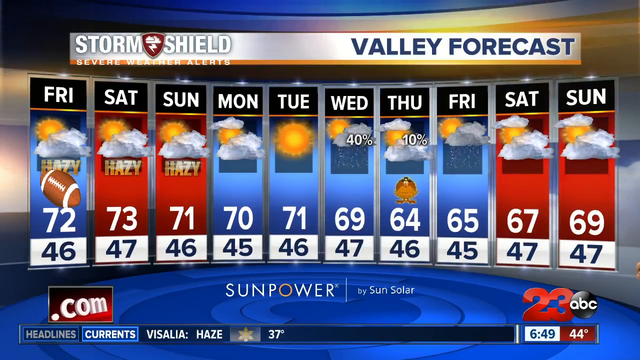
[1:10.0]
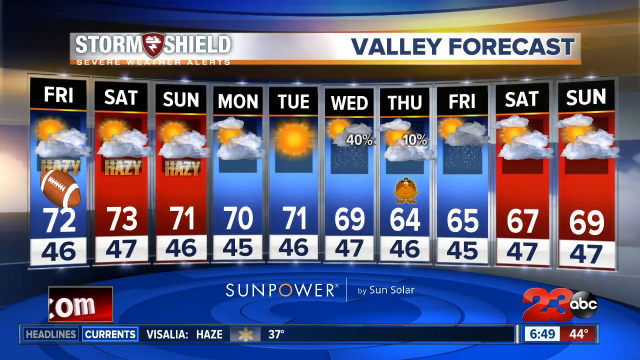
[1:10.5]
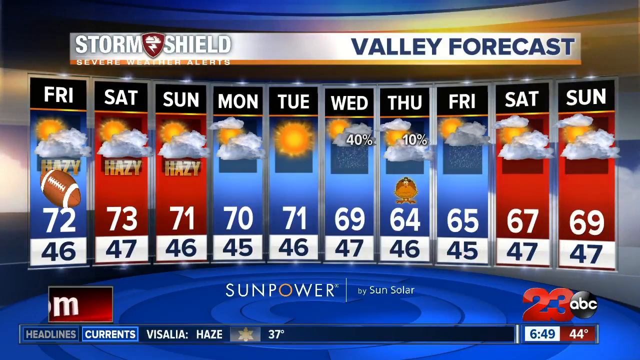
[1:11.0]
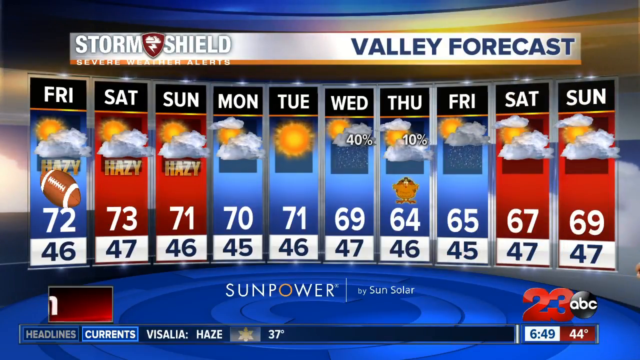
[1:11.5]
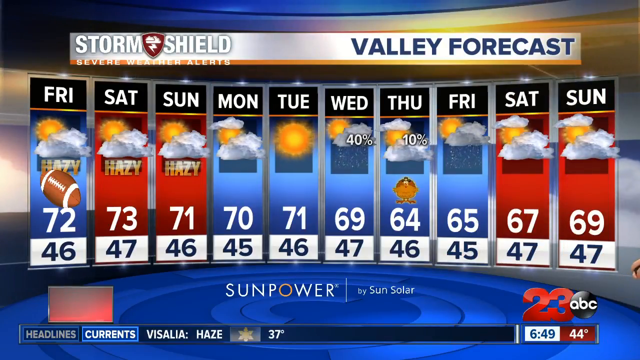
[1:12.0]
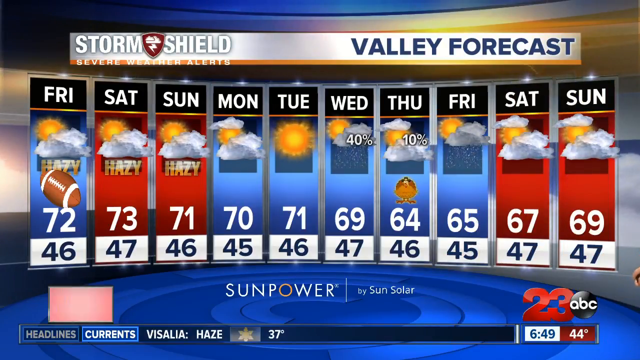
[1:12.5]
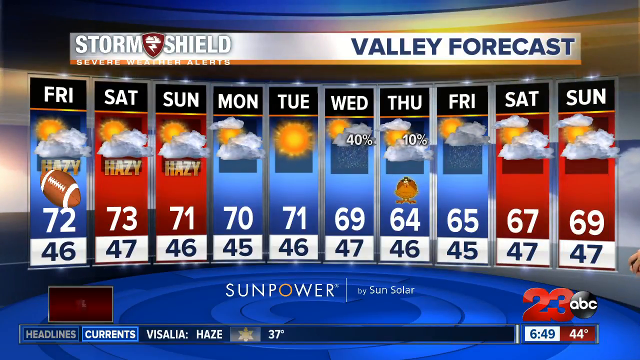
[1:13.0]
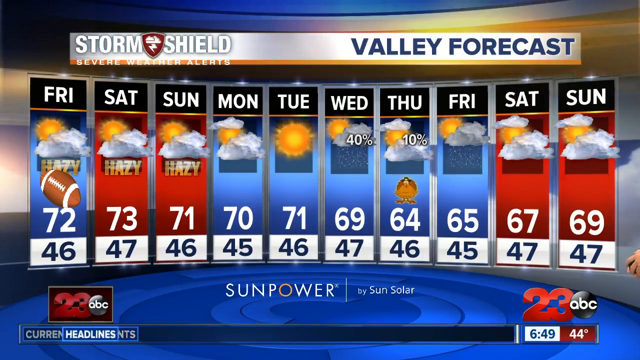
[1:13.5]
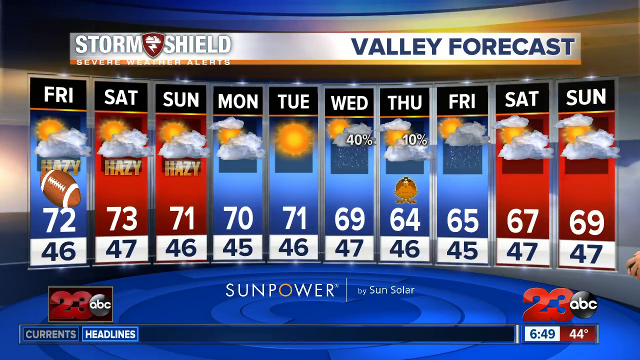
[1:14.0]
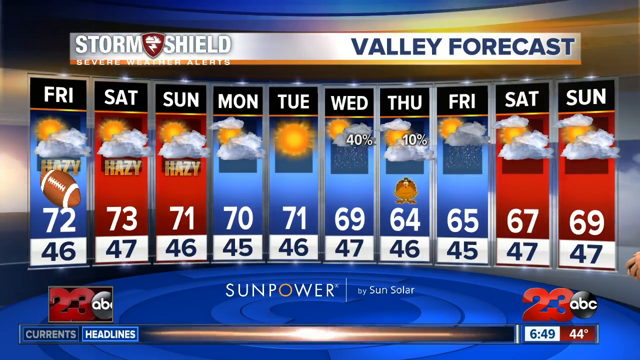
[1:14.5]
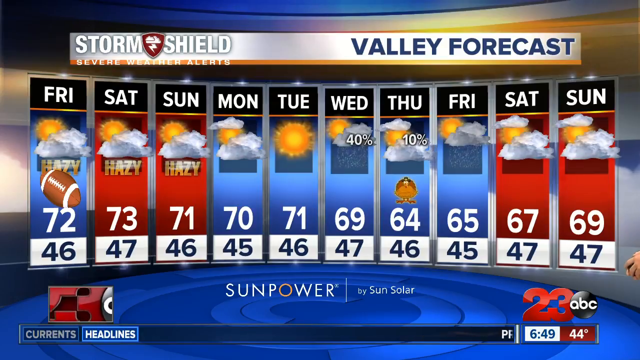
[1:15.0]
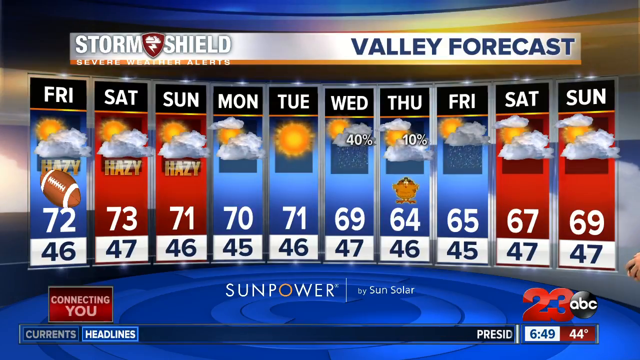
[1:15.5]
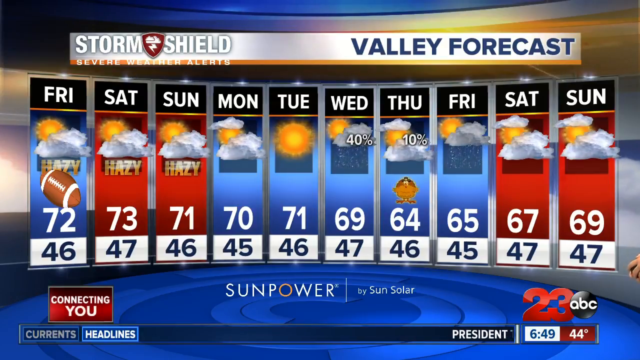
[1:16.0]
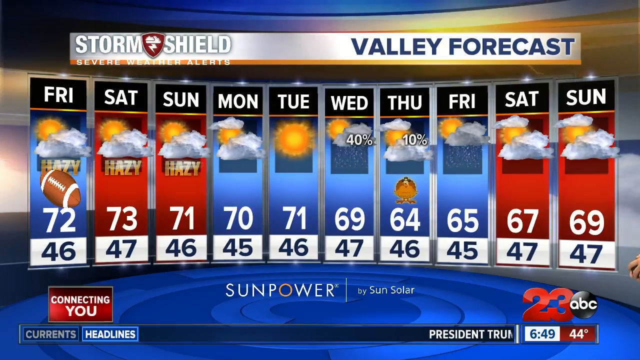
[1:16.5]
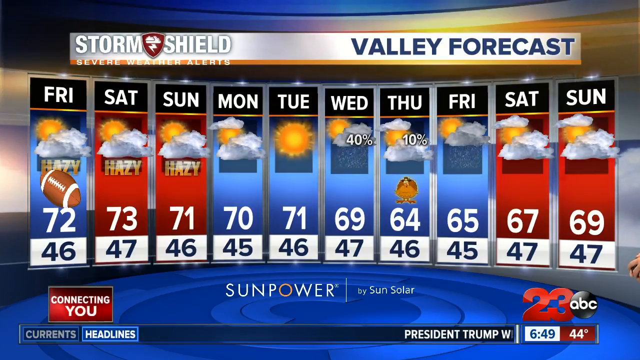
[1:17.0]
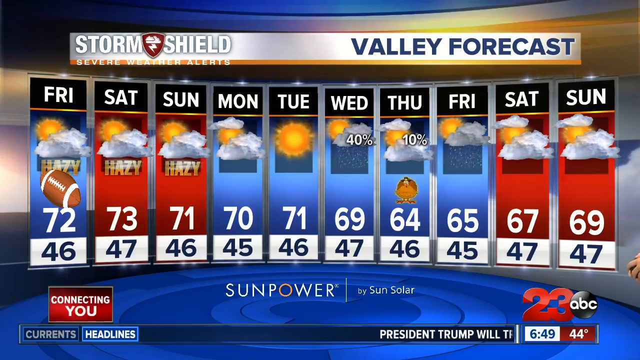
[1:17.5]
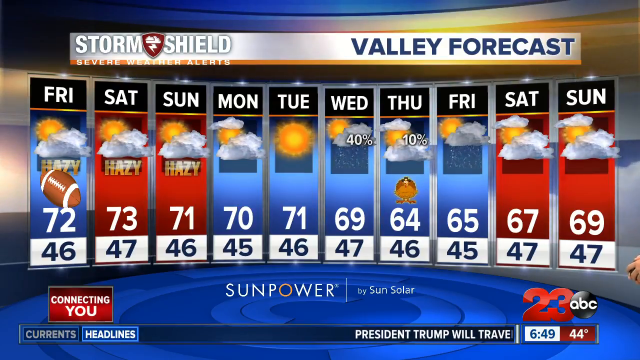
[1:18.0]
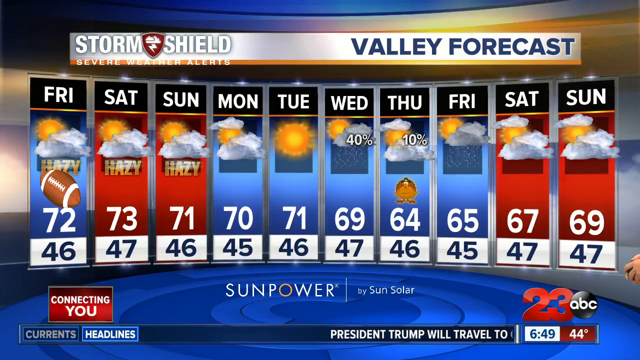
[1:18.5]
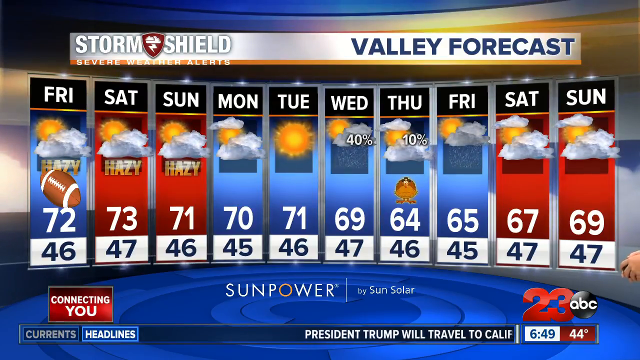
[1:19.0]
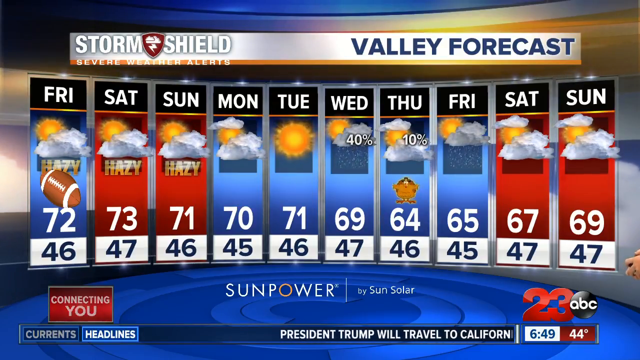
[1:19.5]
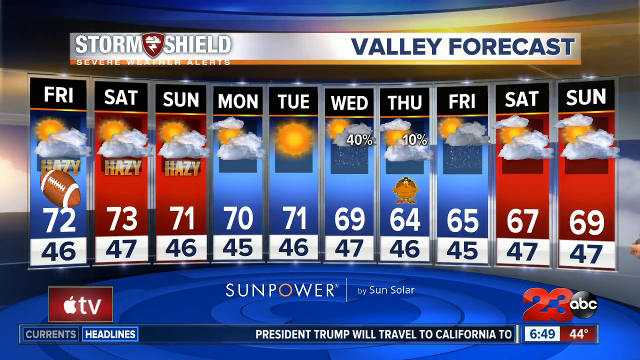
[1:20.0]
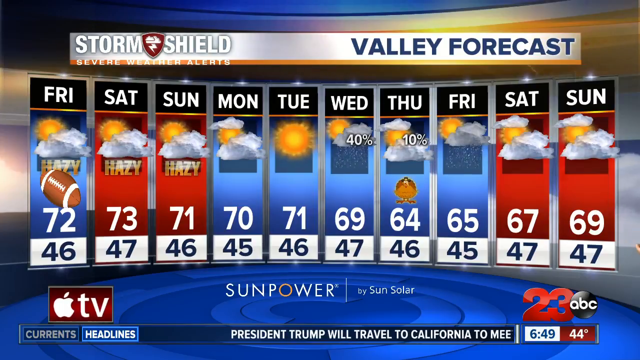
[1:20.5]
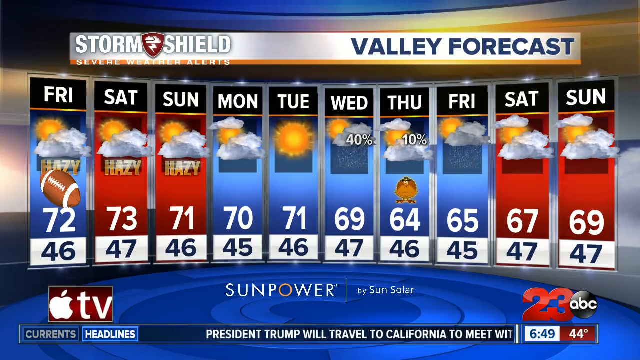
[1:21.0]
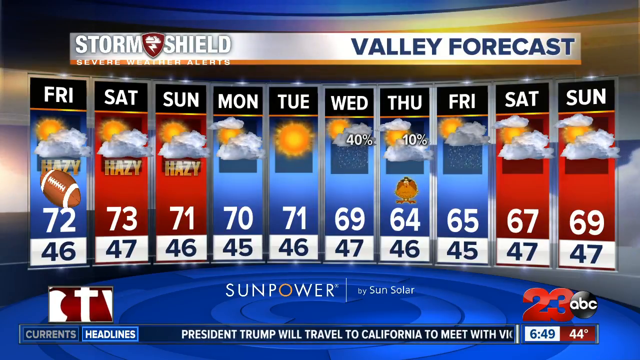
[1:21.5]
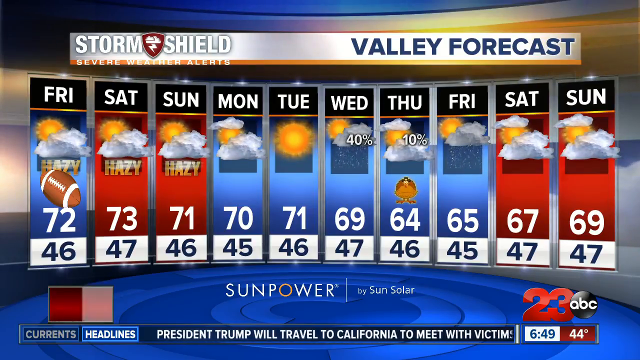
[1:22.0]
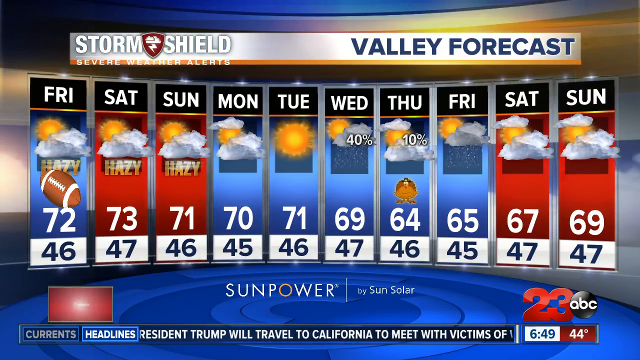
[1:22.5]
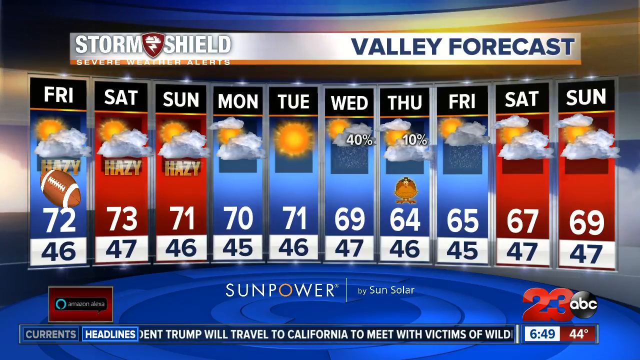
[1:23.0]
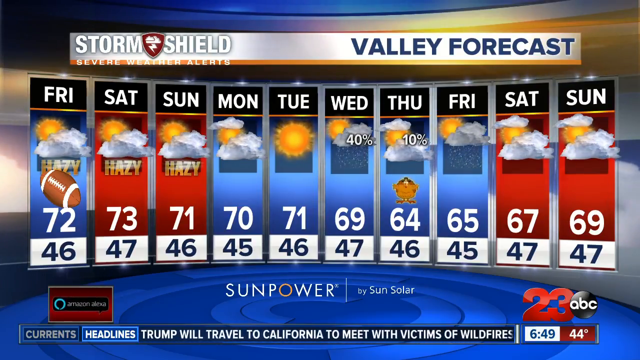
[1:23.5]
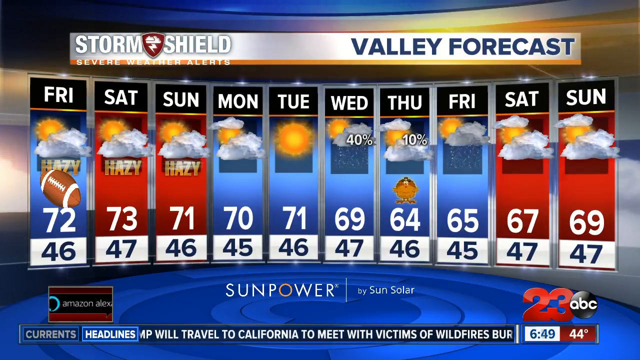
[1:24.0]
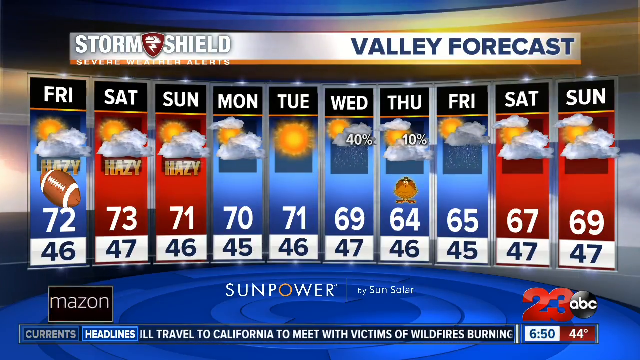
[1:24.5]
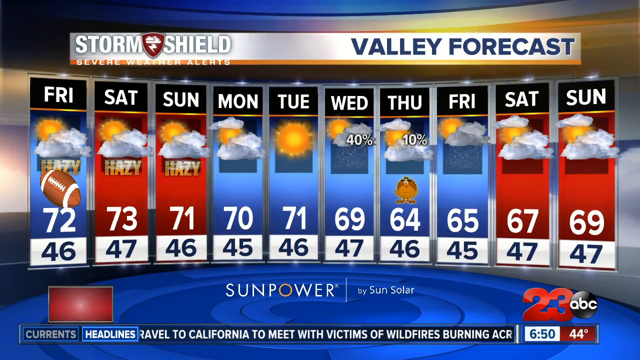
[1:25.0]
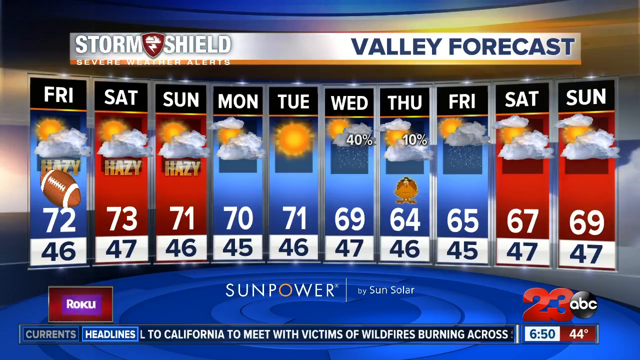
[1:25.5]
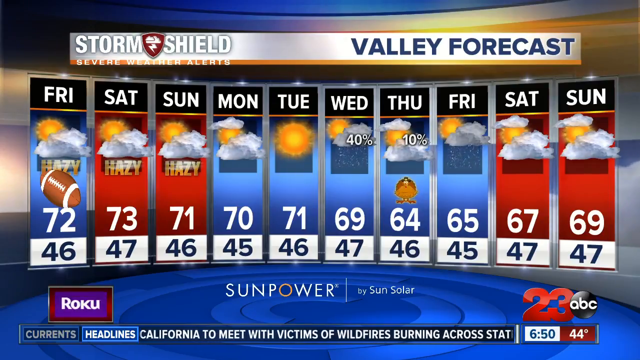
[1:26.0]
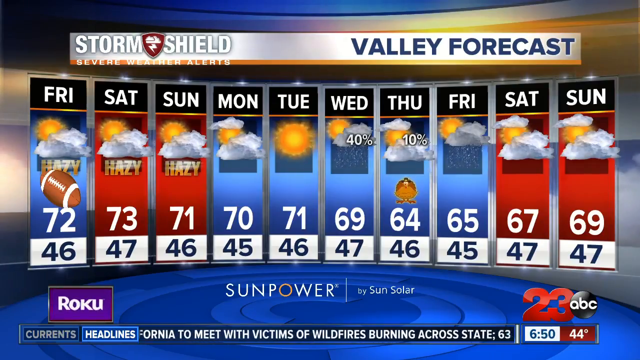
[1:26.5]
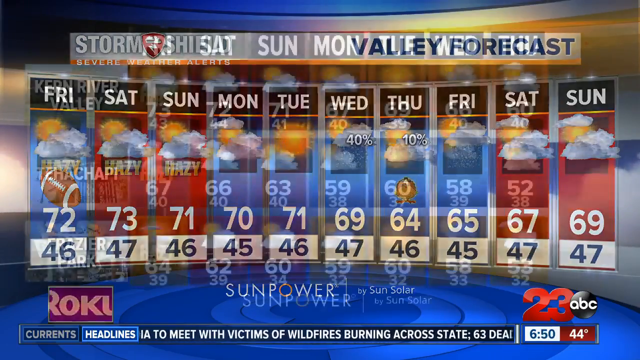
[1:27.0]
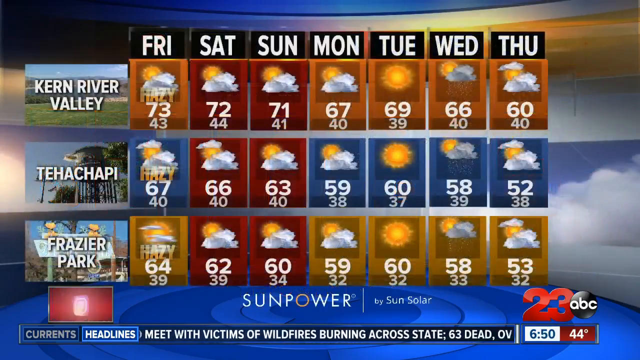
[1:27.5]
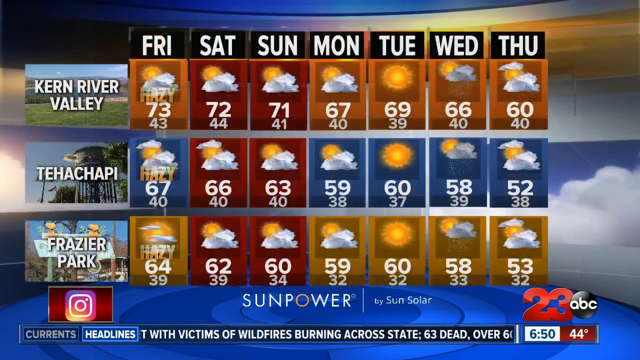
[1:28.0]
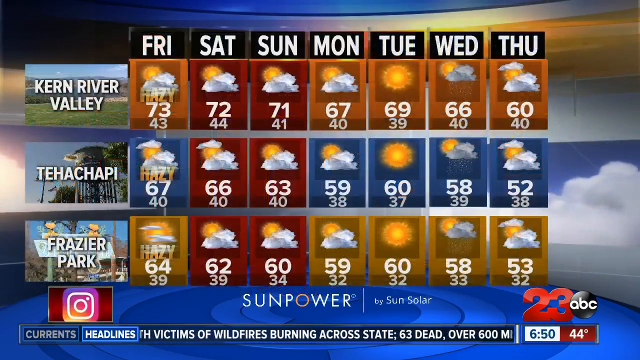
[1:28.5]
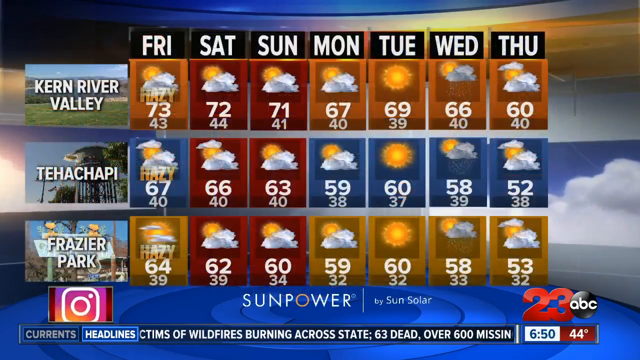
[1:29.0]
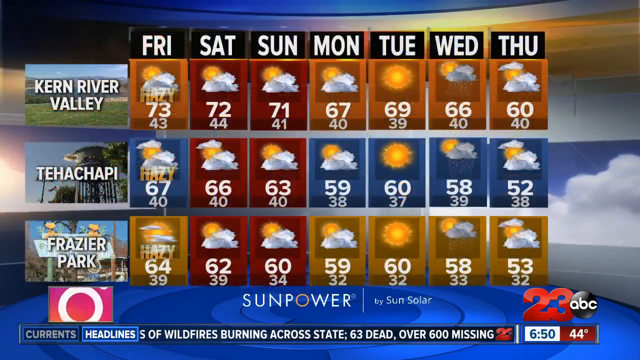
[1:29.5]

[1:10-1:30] The news anchor remains off screen while the valley forecast graphics stay up. A lower-third graphic moving from right to left reads "President Trump will travel to California to meet with victims of wildfires burning across state, 63 dead, over 600 missing." The weather cards show highs and lows for each day. Friday has a football icon over its card and is hazy, with a high of 72 and a low of 46. Saturday is hazy with a high of 73 and a low of 47. Sunday is hazy with a high of 71 and a low of 46. Monday is cloudy with a high of 70 and a low of 48. Tuesday is sunny with a high of 71 and a low of 46. Wednesday has a 40% chance of showers, with a high of 69 and a low of 47. Thursday has a 10% chance of showers and a turkey icon above the high, which is 64, with a low of 46. The following Friday shows a chance of rain with a high of 65 and a low of 45. Saturday shows cloudy weather with a high of 67 and a low of 47, and Sunday has the same level of clouds as Saturday, with a high of 69 and a low of 47.